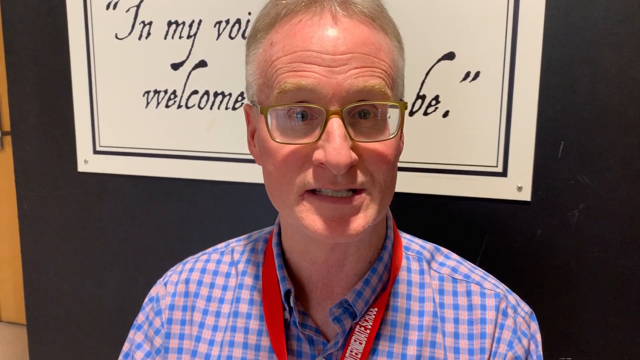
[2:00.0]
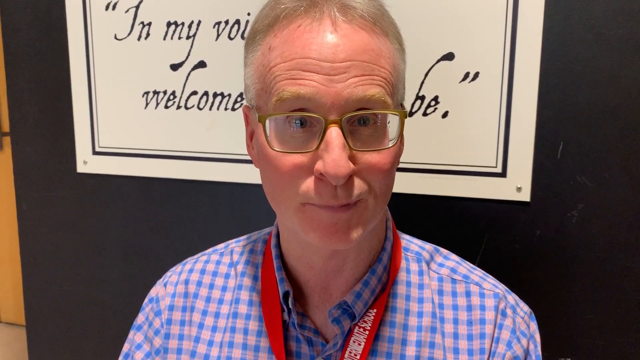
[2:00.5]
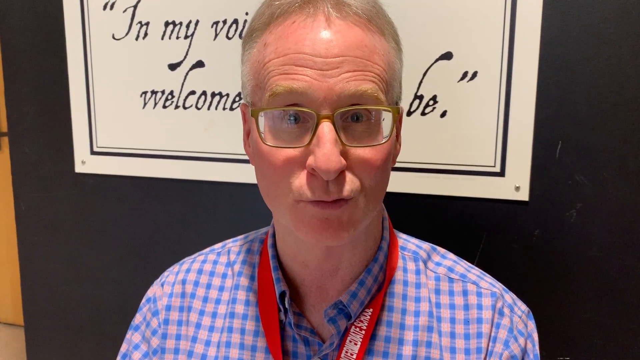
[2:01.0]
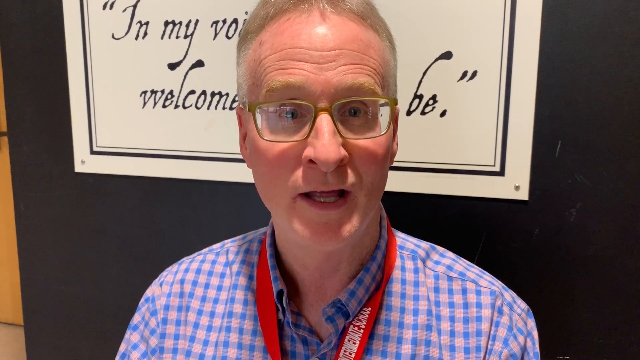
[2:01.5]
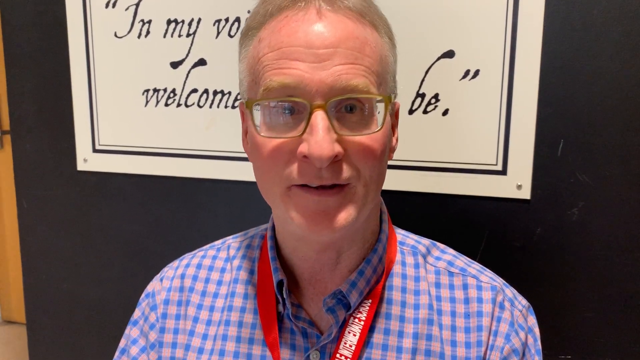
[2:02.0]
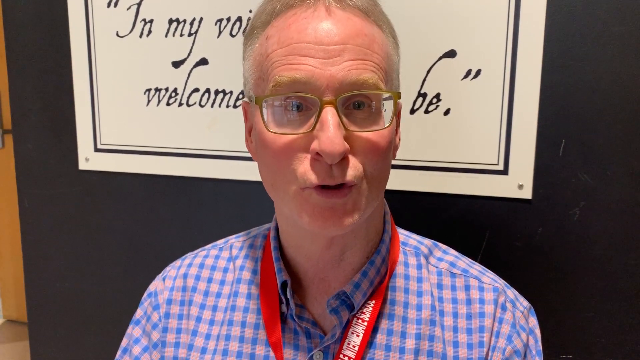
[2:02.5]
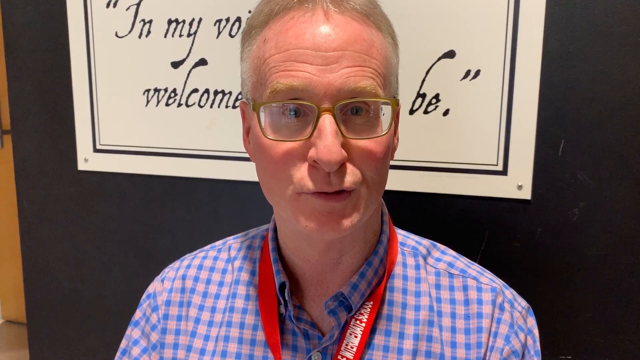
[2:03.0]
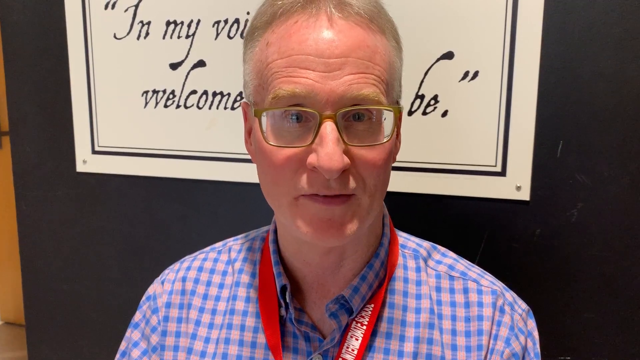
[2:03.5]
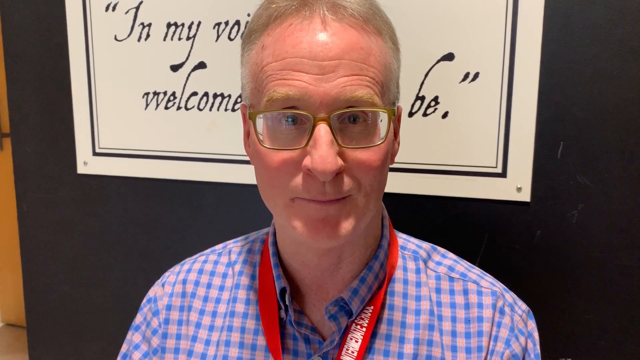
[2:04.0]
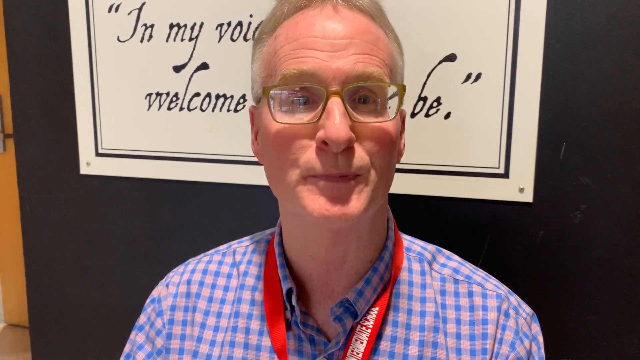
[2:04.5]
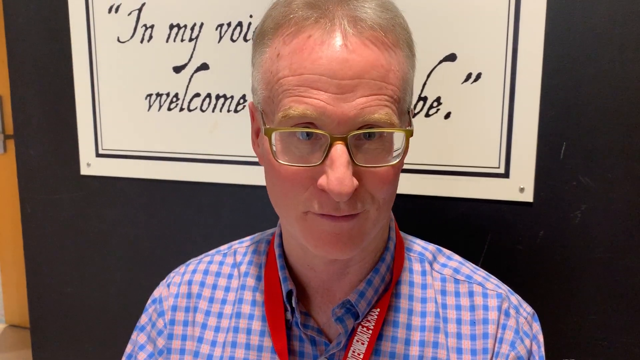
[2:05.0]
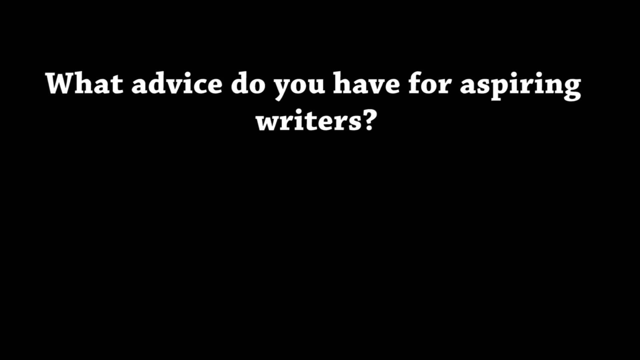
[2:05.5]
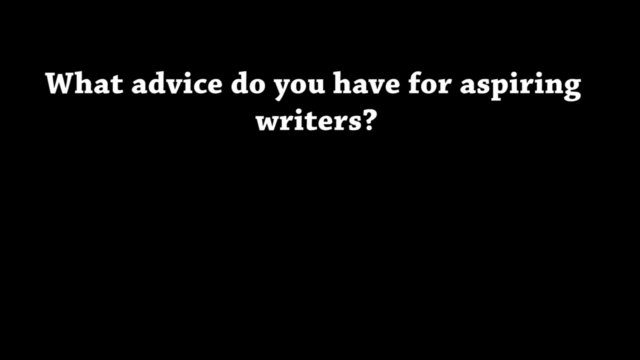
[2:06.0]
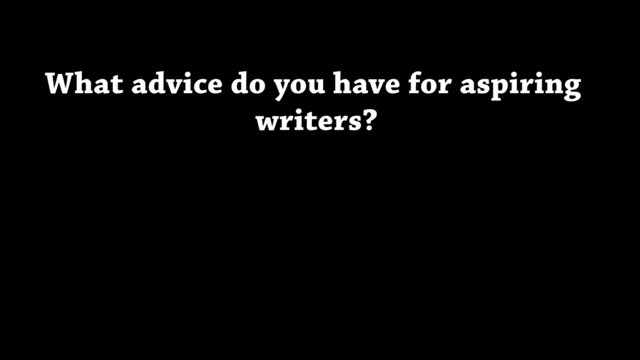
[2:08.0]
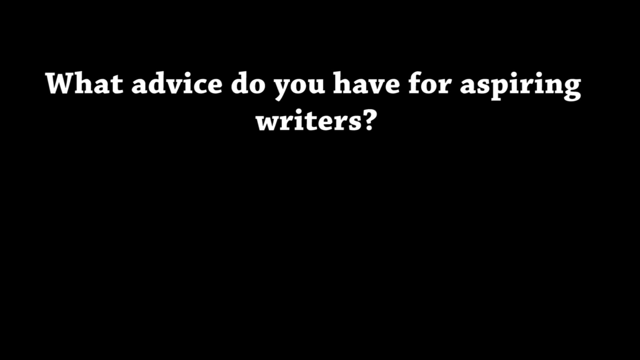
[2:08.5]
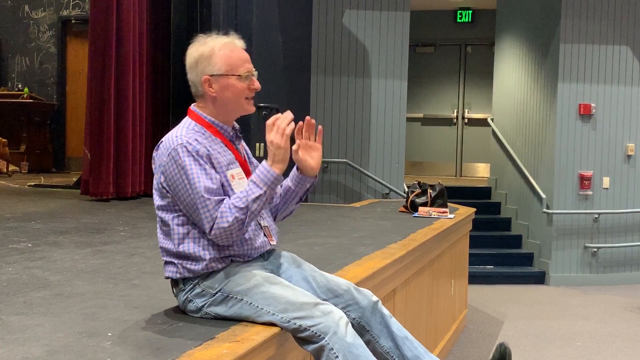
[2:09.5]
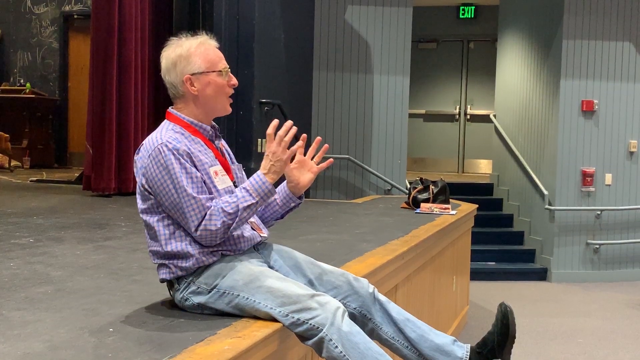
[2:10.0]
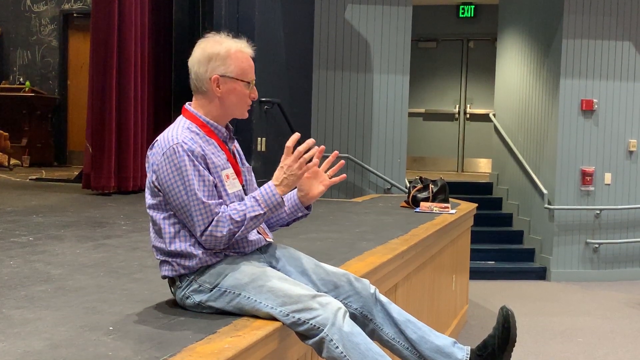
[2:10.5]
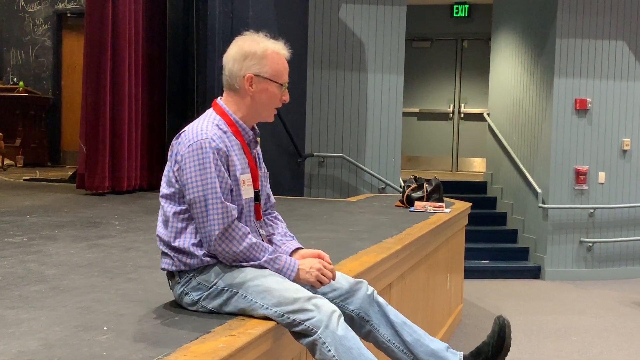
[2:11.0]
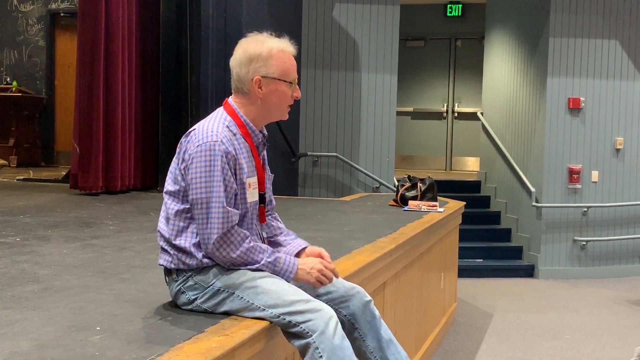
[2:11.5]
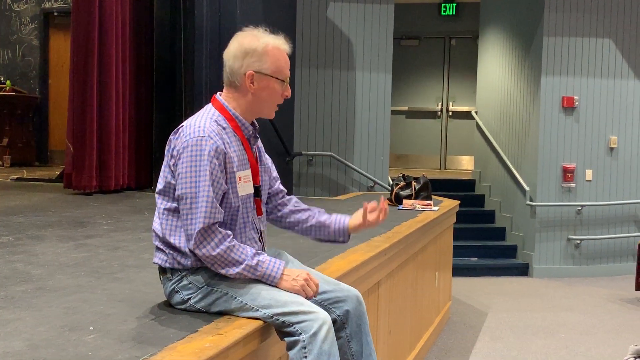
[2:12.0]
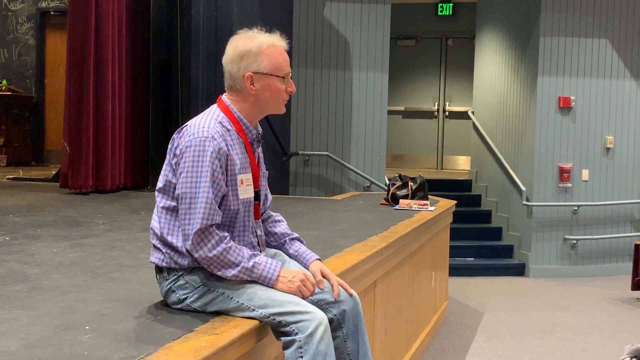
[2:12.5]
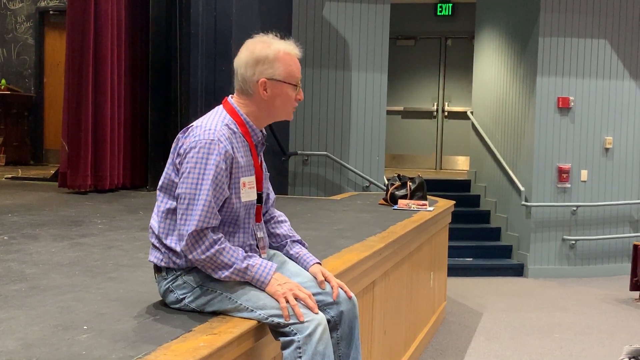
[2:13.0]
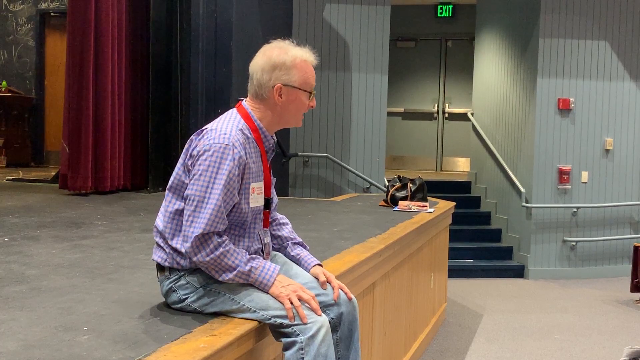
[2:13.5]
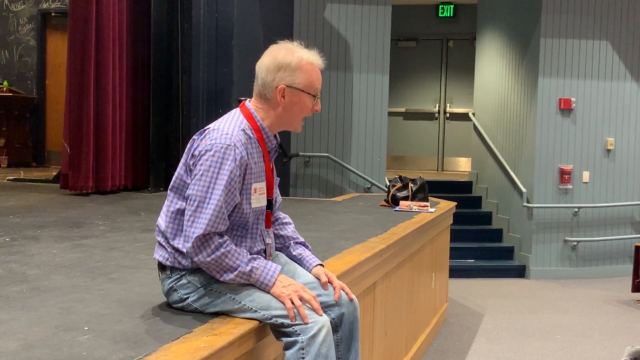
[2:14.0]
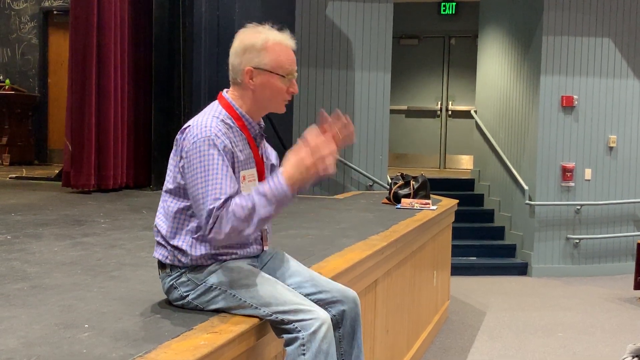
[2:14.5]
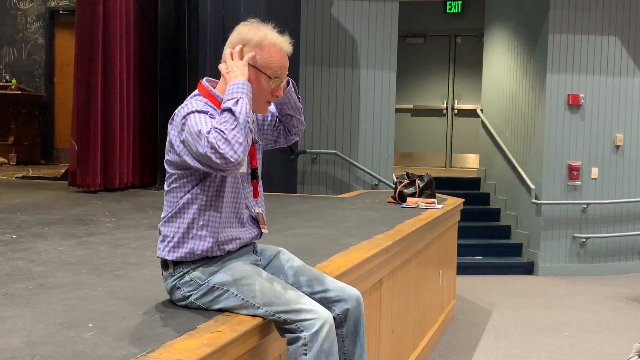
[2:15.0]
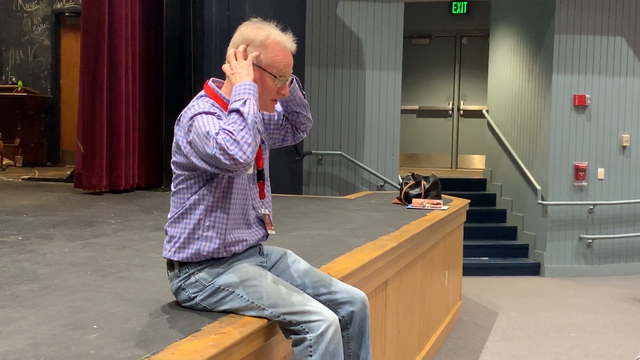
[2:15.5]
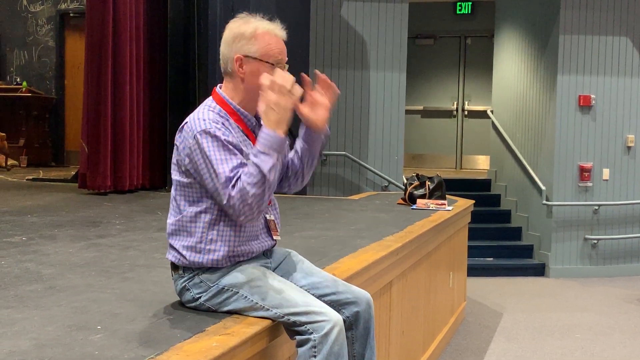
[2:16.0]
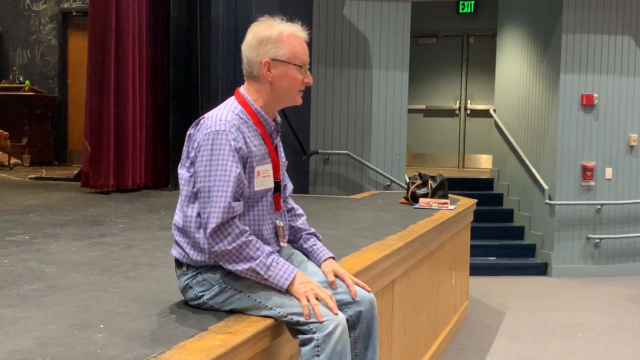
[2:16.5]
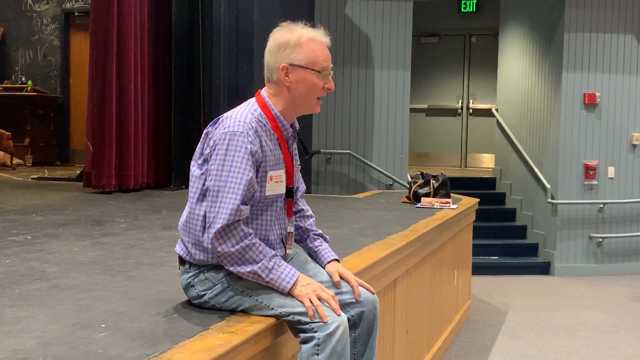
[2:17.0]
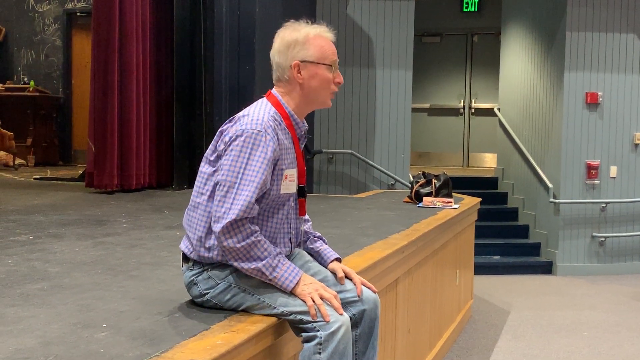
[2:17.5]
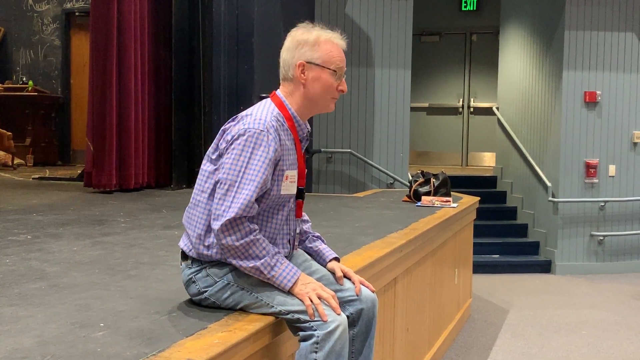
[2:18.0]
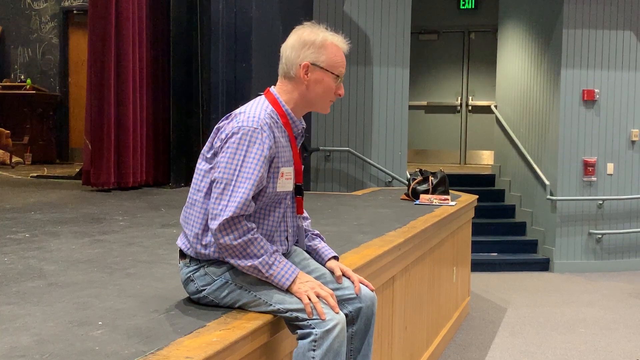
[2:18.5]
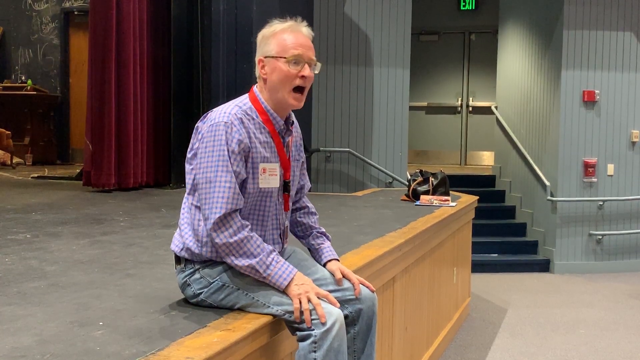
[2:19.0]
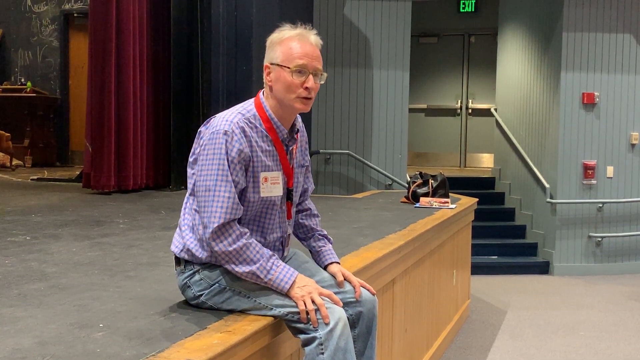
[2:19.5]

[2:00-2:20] The man talks to the high school seniors and seems to be answering their questions, including one about what advice he has for aspiring writers. He is on the edge of the stage, talking and shaking his head, looking at the kids, first to the left and then to the right. He seems to have them engaged.